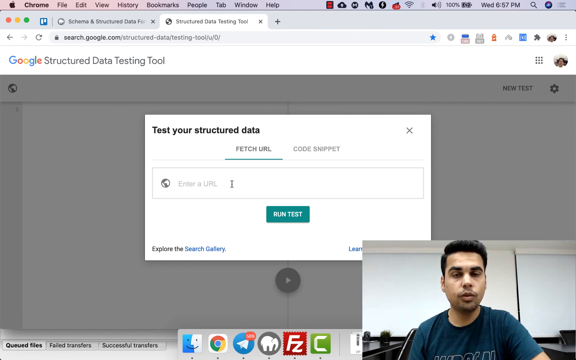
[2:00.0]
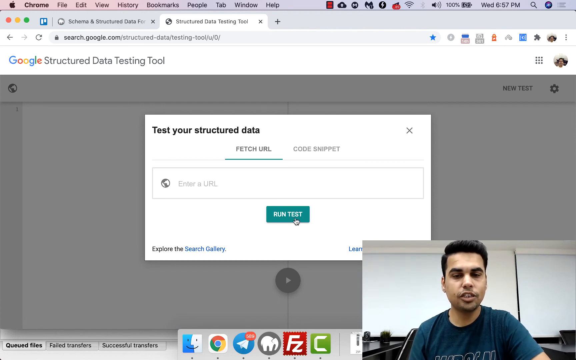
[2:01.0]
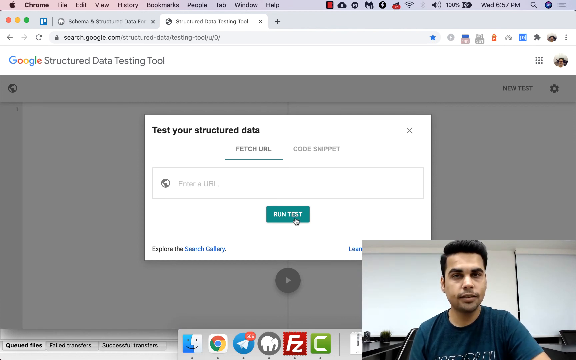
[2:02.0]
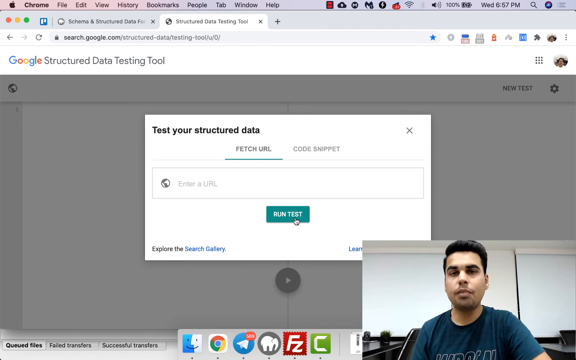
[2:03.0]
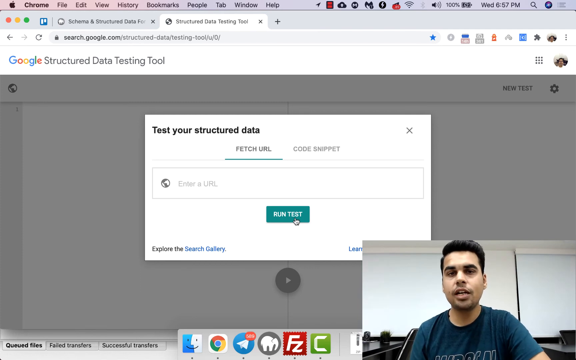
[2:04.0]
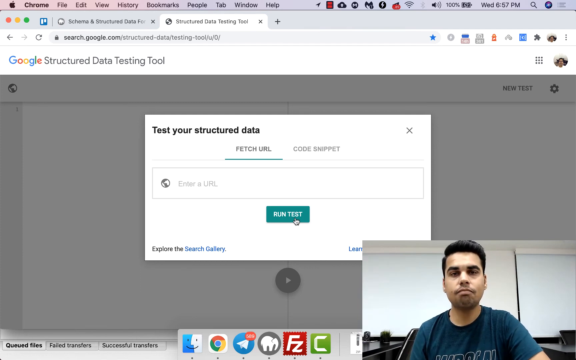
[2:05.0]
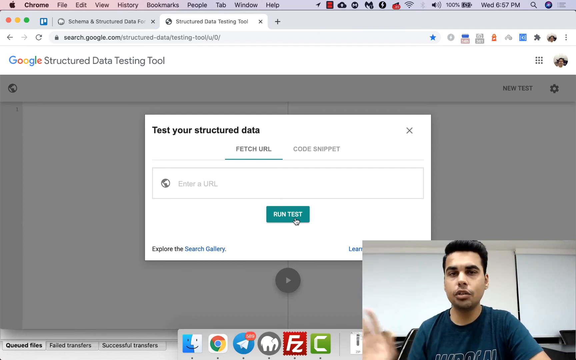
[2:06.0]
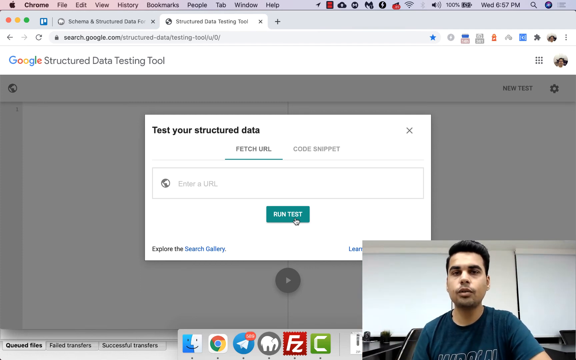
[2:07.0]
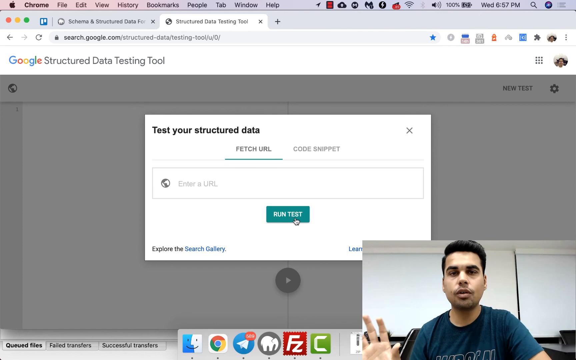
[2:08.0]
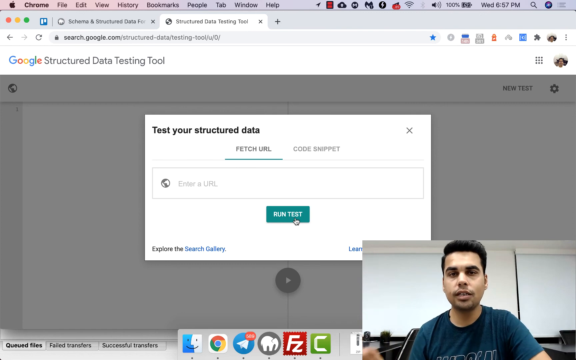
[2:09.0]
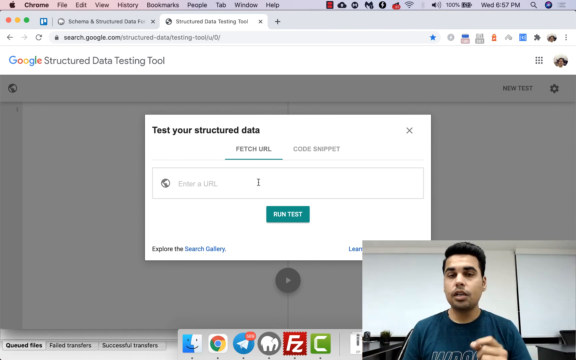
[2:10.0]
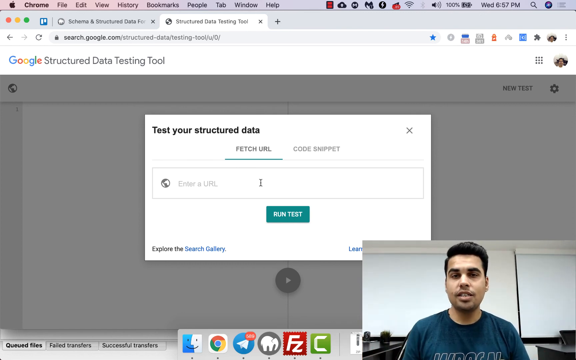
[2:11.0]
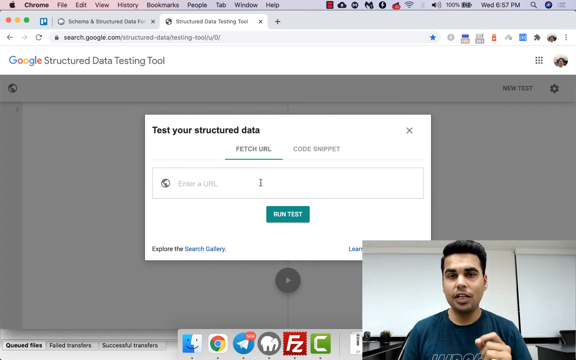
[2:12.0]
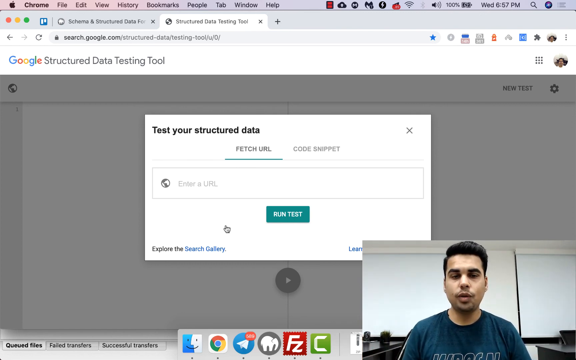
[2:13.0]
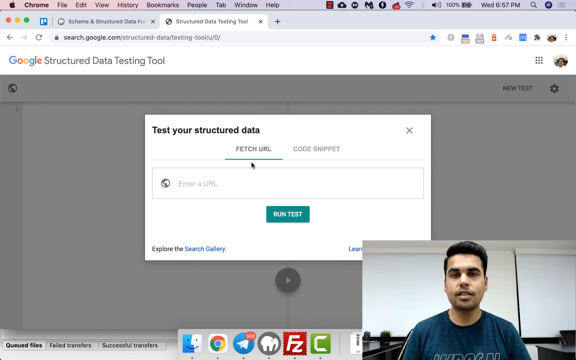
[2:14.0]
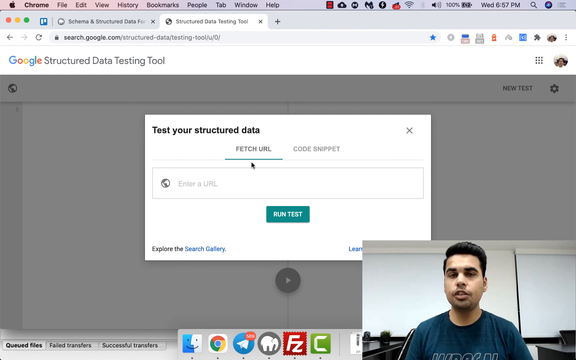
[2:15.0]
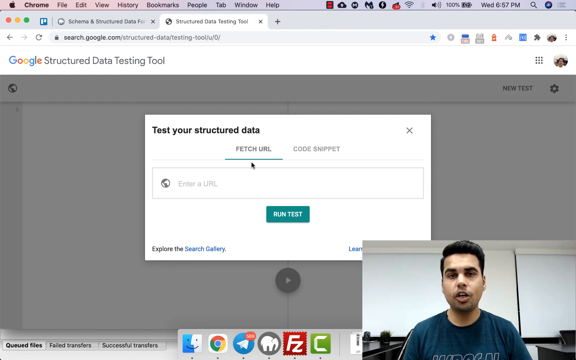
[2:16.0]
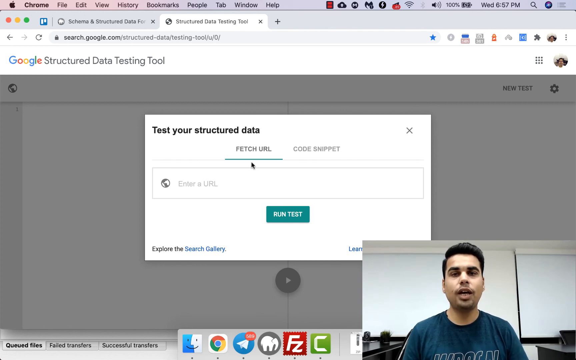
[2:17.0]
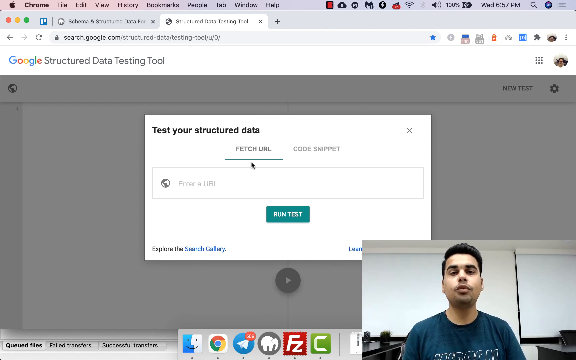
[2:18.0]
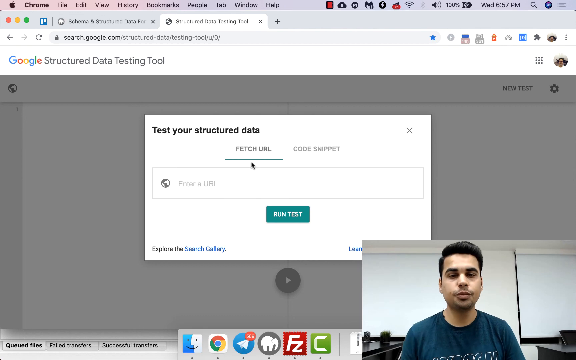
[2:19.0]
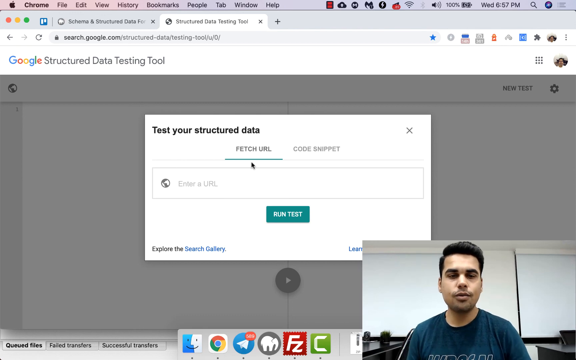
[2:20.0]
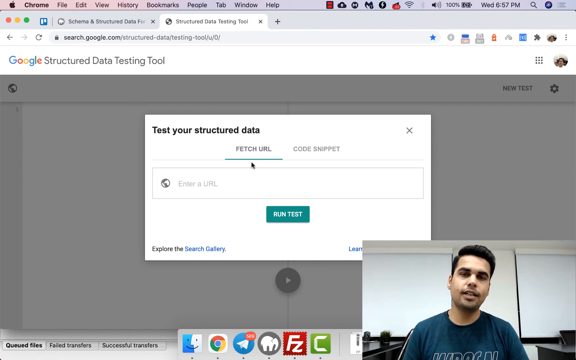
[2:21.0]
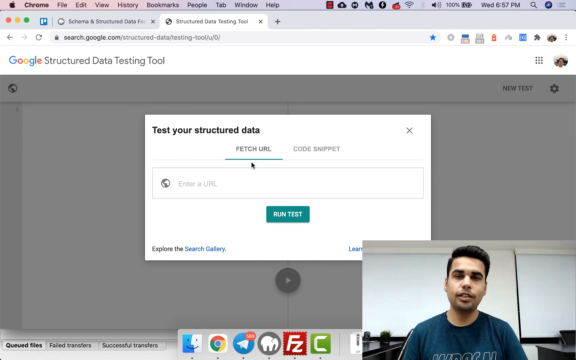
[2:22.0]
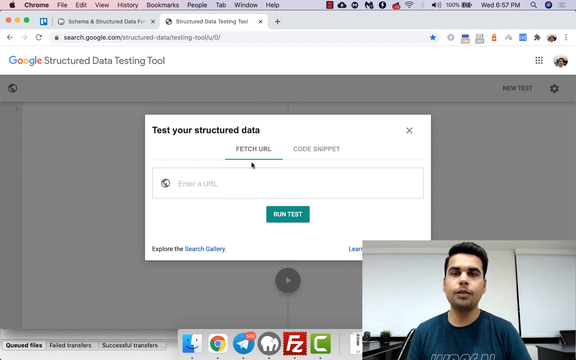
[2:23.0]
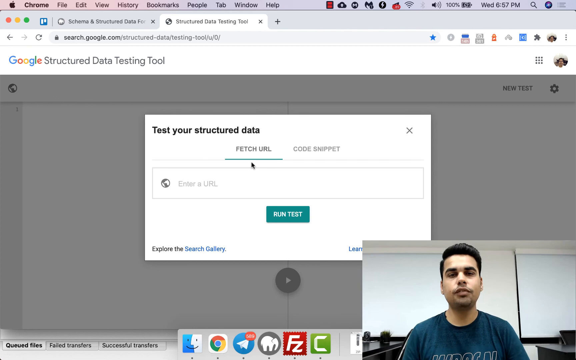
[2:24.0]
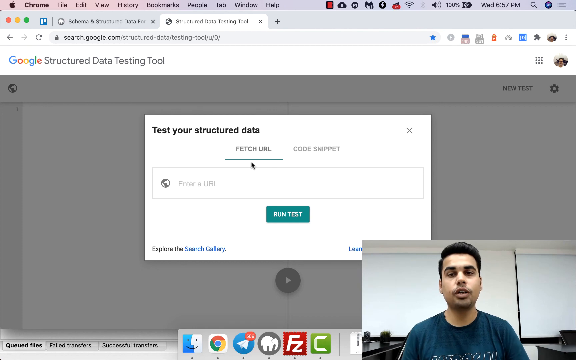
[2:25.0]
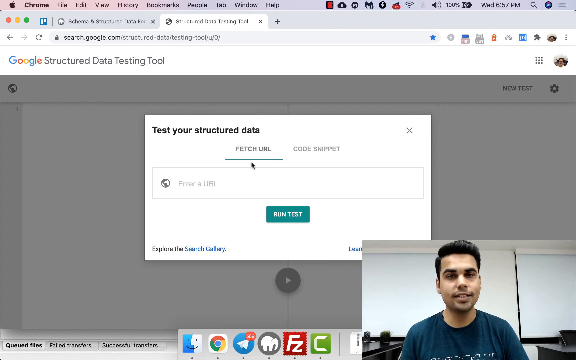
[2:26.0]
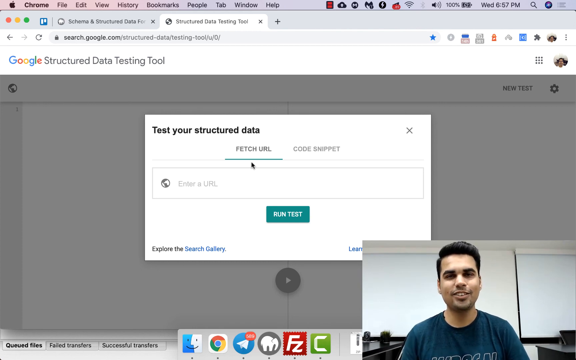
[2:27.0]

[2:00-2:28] He continues speaking to the camera while his cursor hovers over a small, somewhat green run test button. He then hovers back over the enter URL box and moves his mouse around over it. He pauses and speaks to the camera again, continuing to use hand gestures. He keeps speaking but does not put anything into the enter URL box, at times looking between the camera and his screen. He concludes by saying a few words, smiles, and says thank you. The video does not return to the original page; it ends on the structured data testing tool page on the Google website.